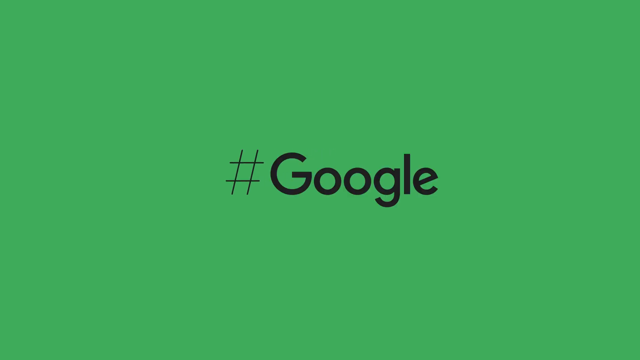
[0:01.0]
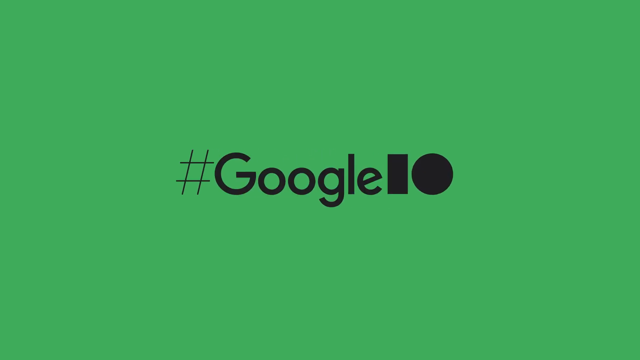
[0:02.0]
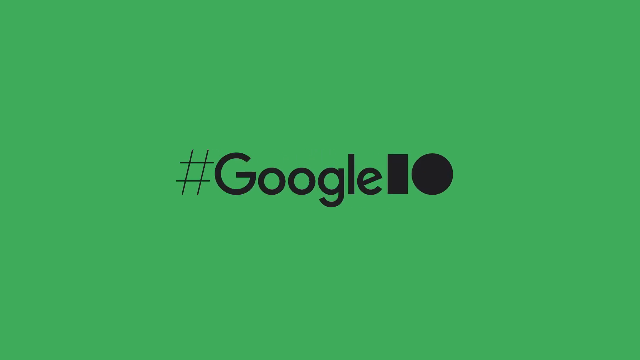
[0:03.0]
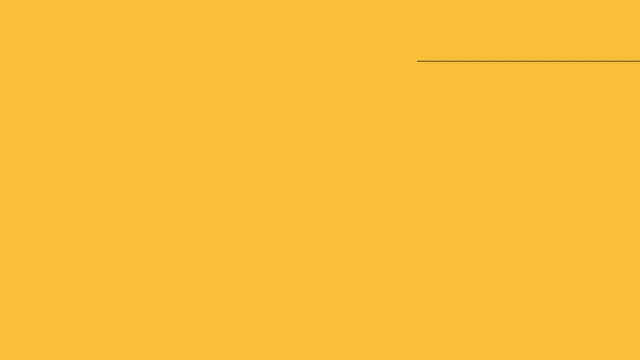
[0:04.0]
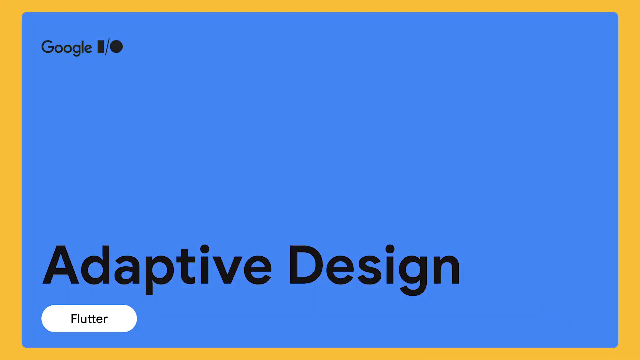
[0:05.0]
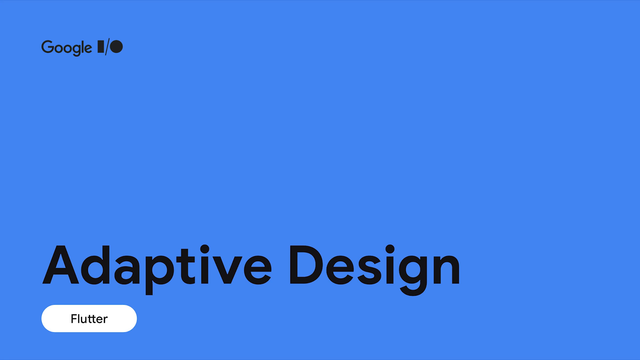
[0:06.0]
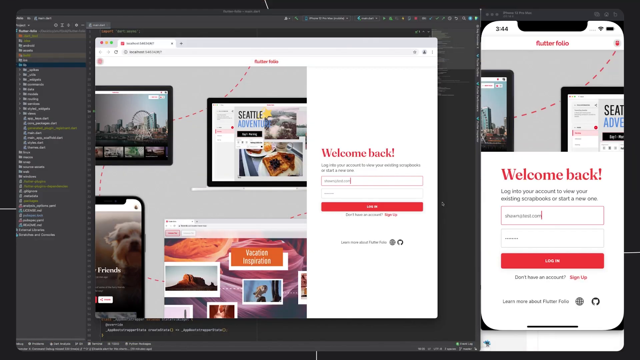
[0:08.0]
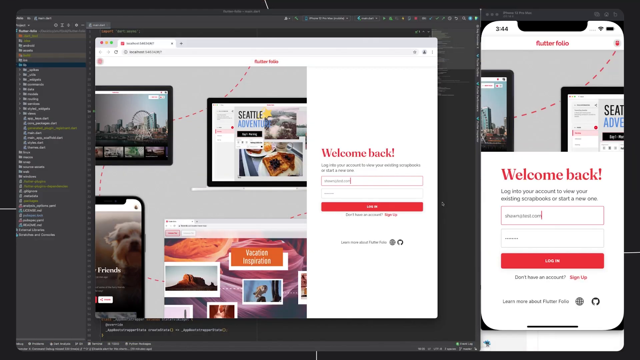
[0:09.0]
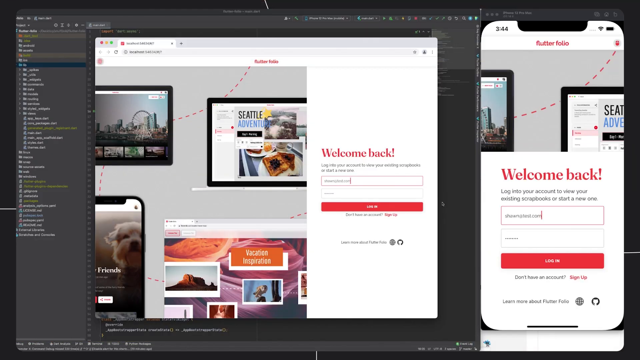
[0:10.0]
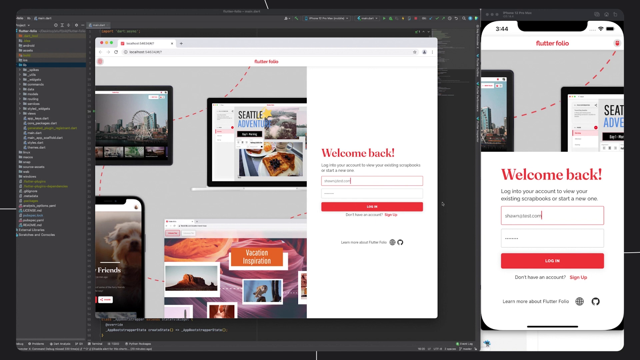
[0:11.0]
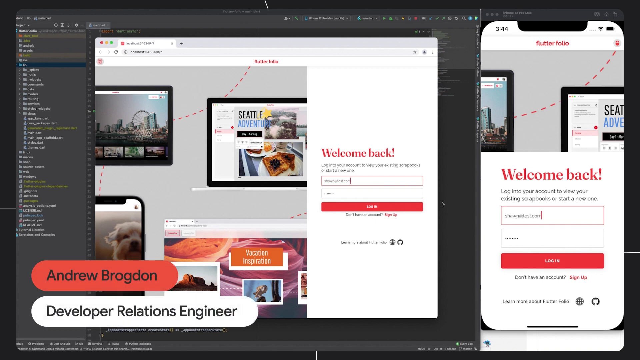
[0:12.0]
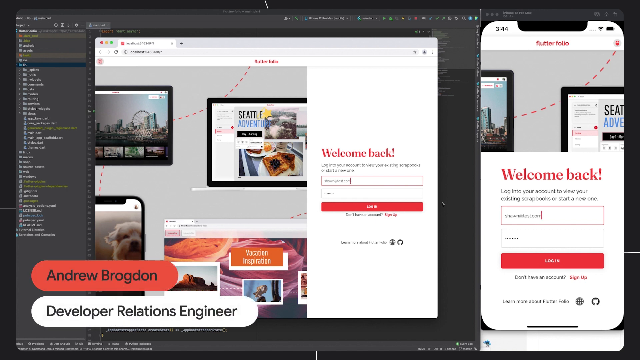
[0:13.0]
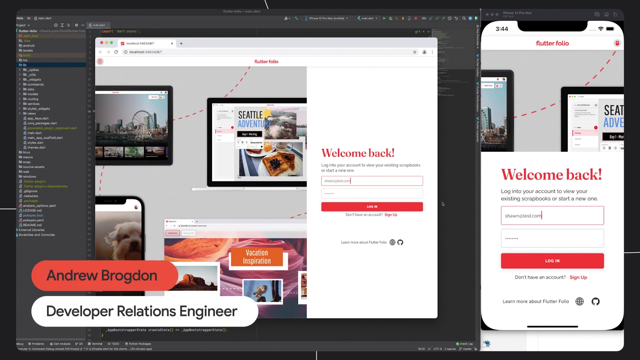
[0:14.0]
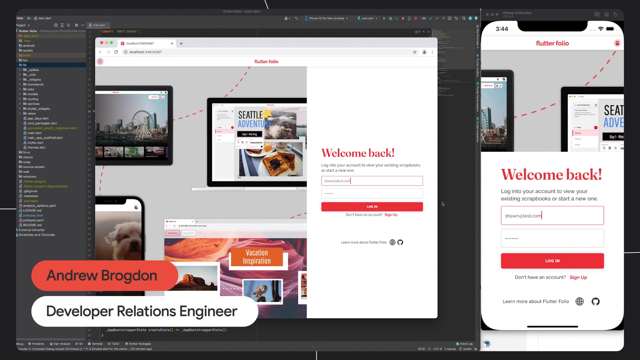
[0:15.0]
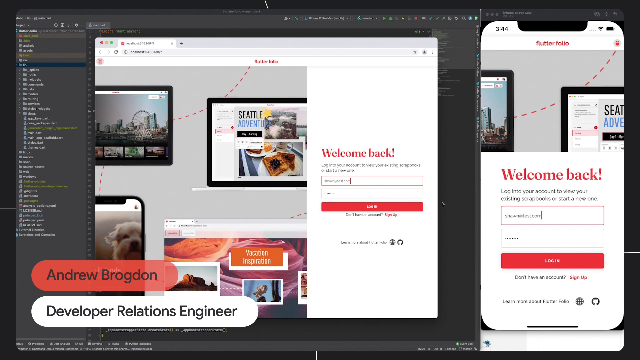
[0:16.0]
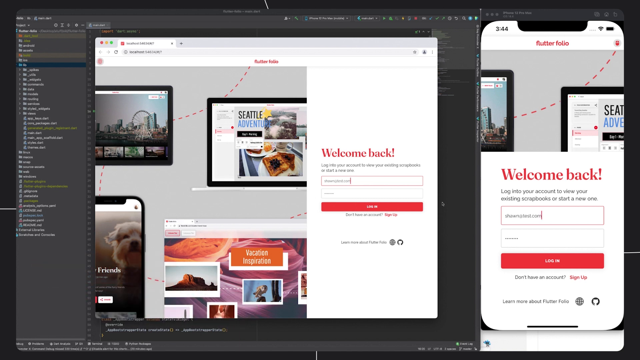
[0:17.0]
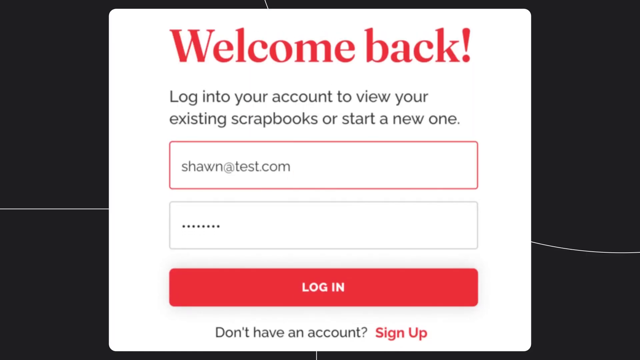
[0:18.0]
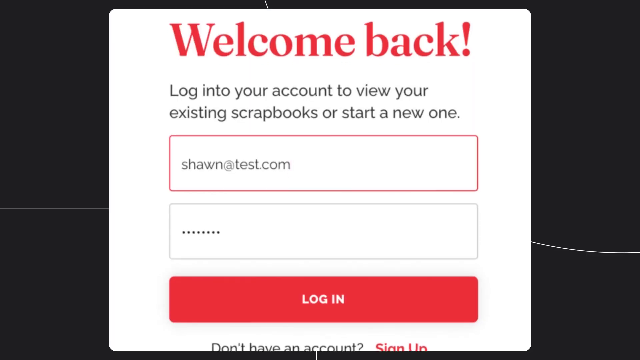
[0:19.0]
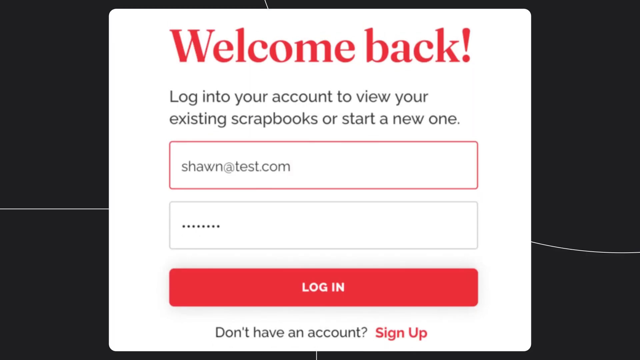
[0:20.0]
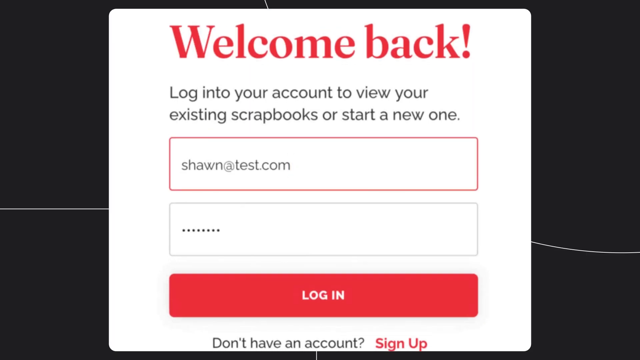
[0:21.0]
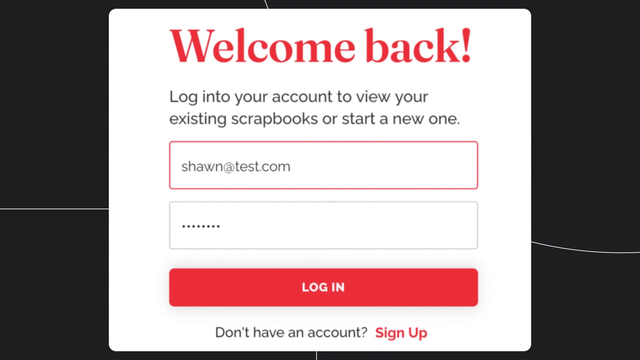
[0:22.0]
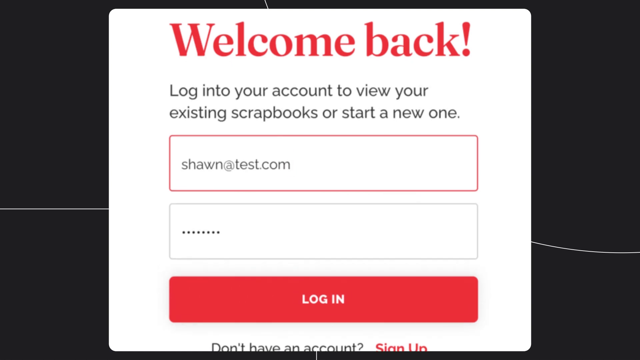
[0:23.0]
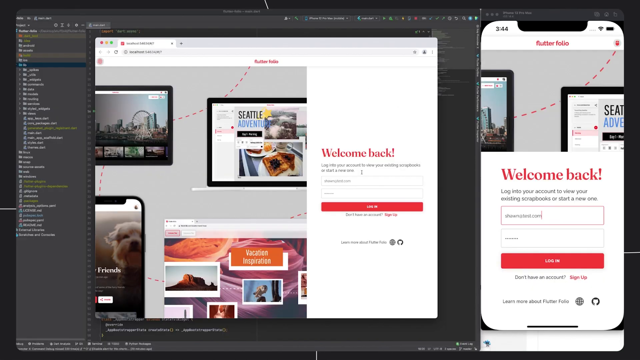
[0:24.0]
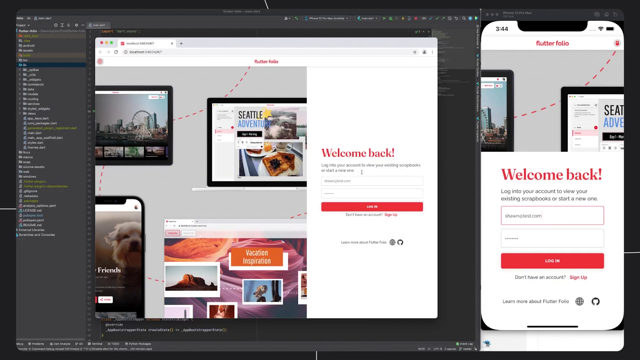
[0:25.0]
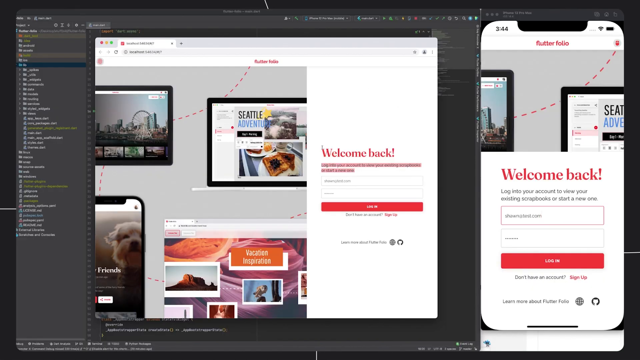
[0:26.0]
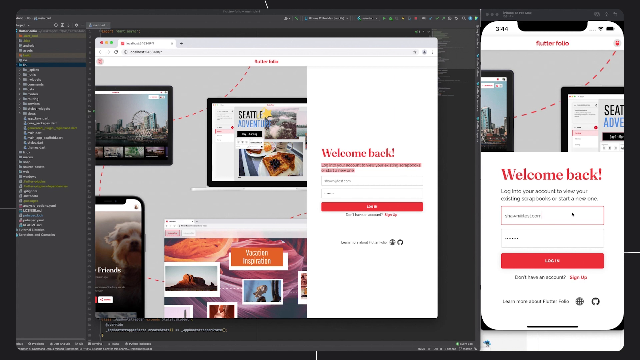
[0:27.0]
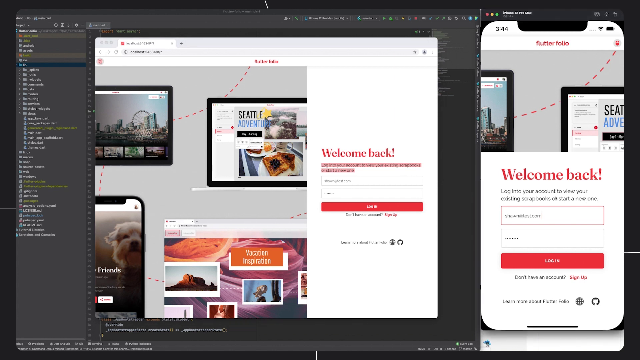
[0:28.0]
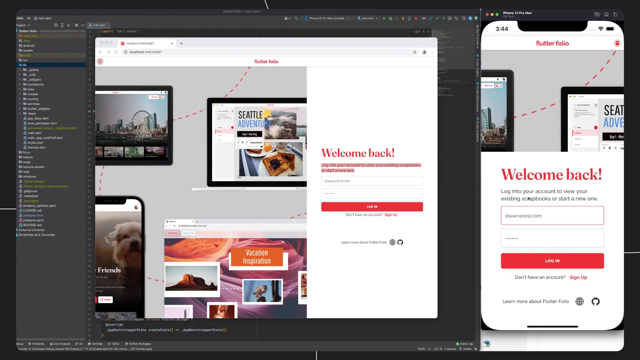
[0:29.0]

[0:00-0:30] The video concerns adaptive design, and it looks like the user wants to design something. A portal appears where he is trying to log in, followed by the view once he is logged in. In the app the first background is green, followed by an orange background and then a blue one. "Google #GoogleTent" is showing on the screen. A screen shows a few designed templates; the user apparently is trying to design something, possibly a card or a wallpaper. He seems to be using the application to decorate a wallpaper or something similar.